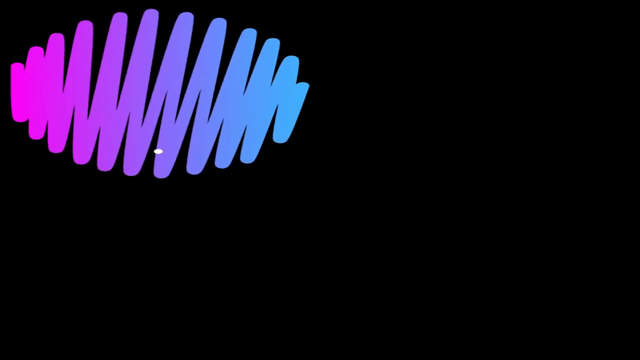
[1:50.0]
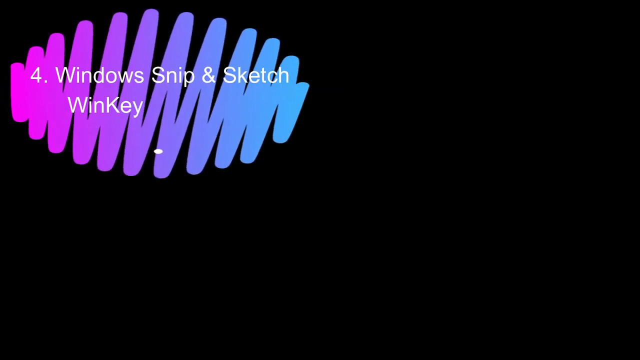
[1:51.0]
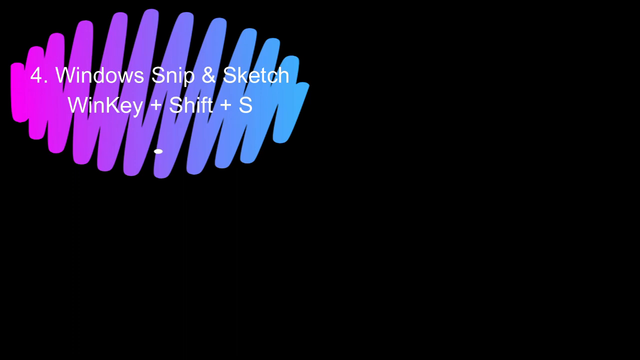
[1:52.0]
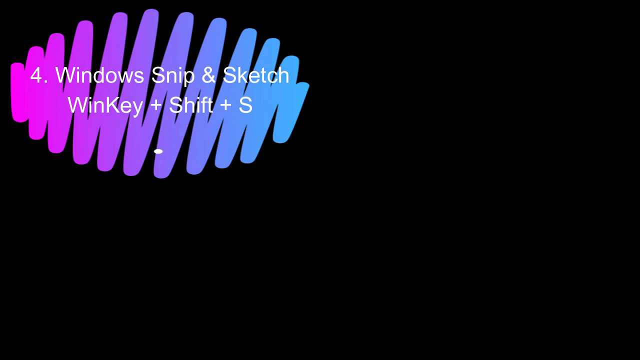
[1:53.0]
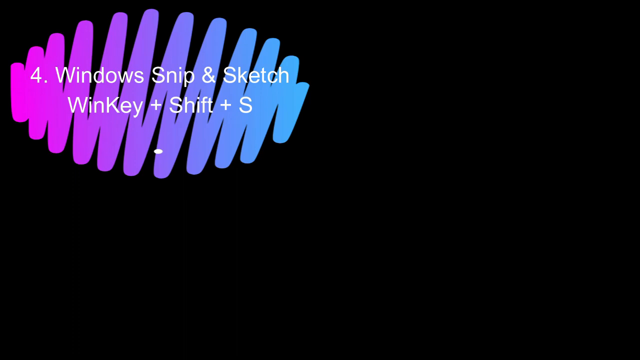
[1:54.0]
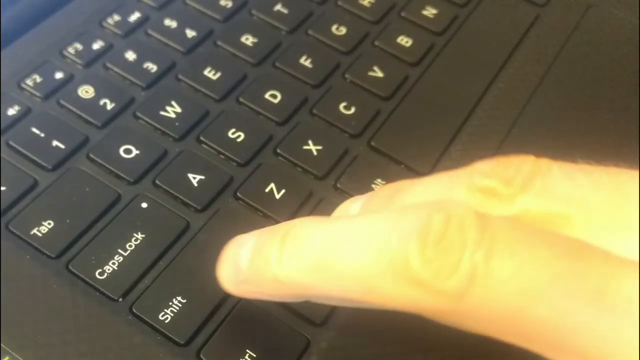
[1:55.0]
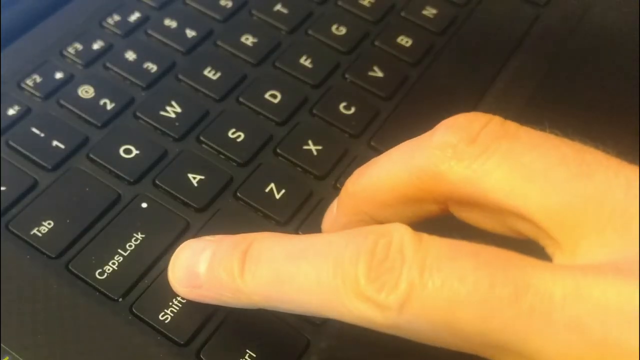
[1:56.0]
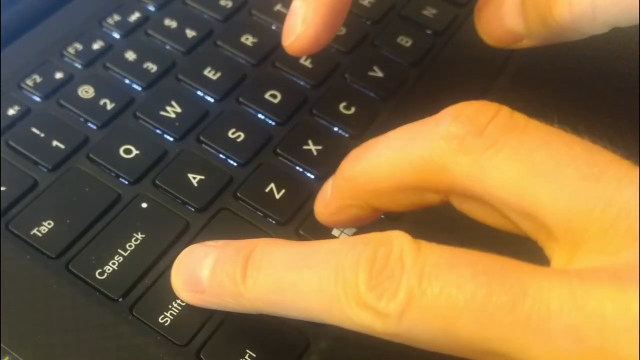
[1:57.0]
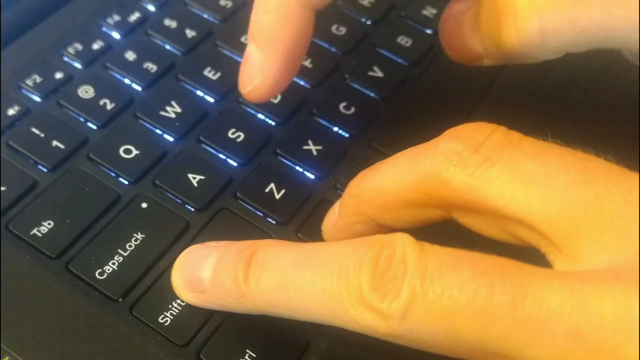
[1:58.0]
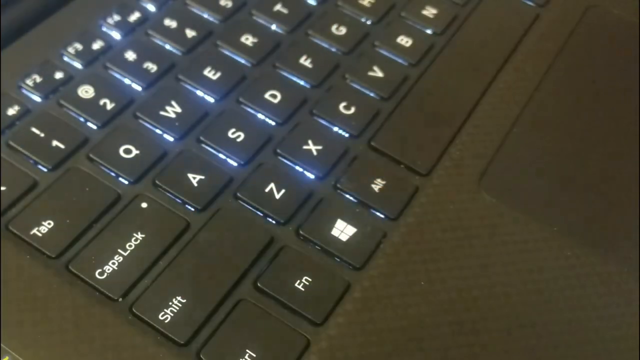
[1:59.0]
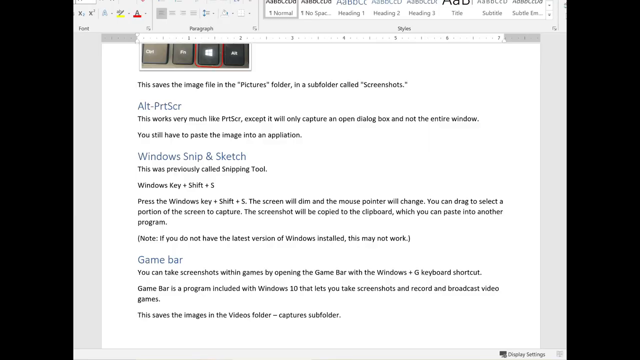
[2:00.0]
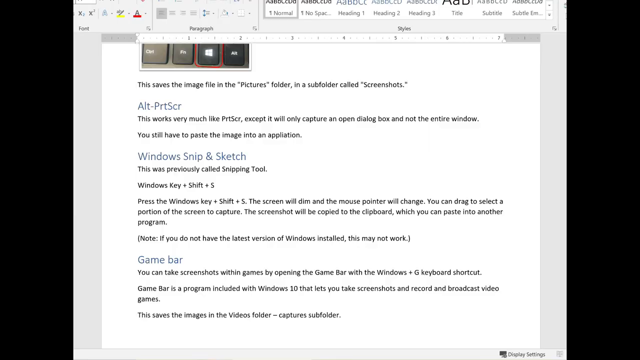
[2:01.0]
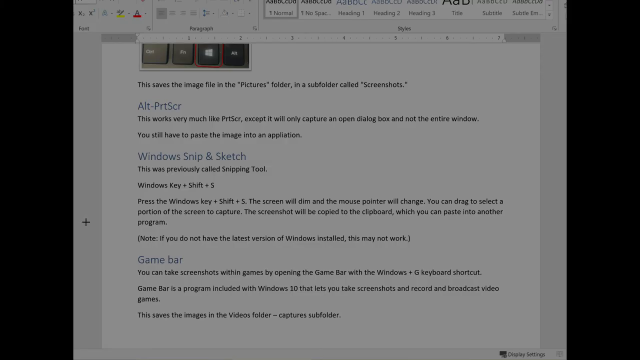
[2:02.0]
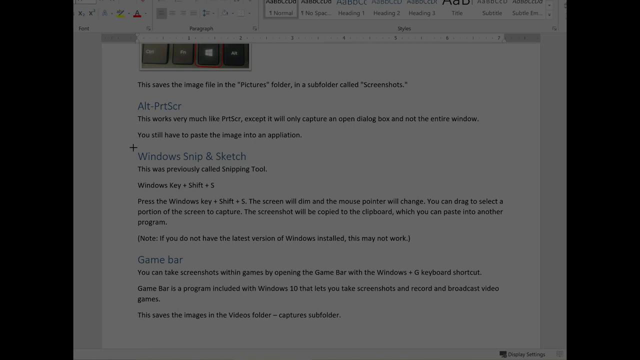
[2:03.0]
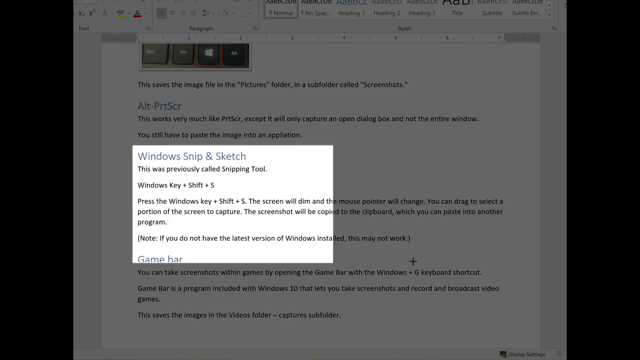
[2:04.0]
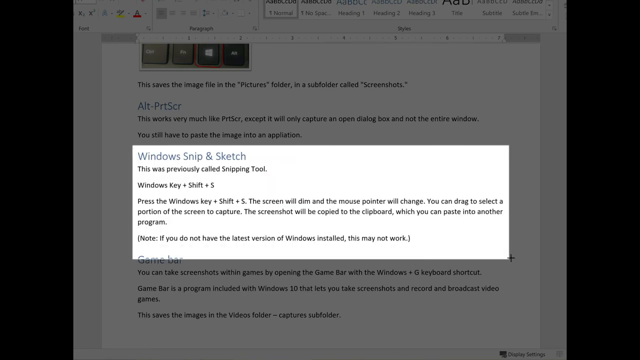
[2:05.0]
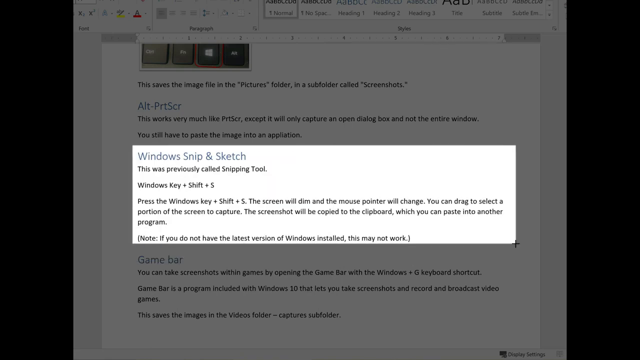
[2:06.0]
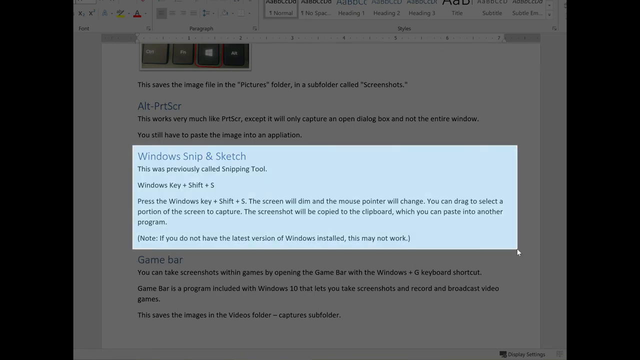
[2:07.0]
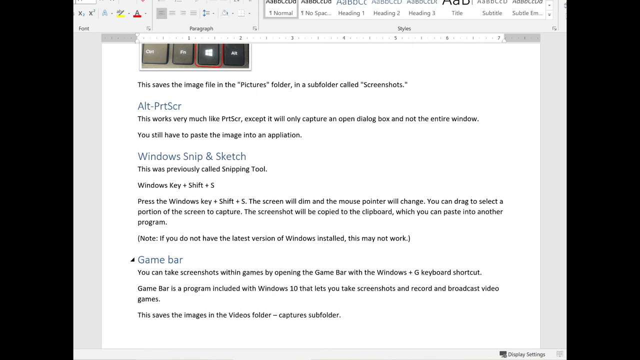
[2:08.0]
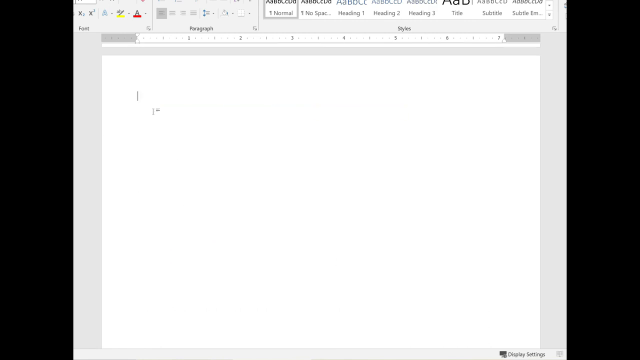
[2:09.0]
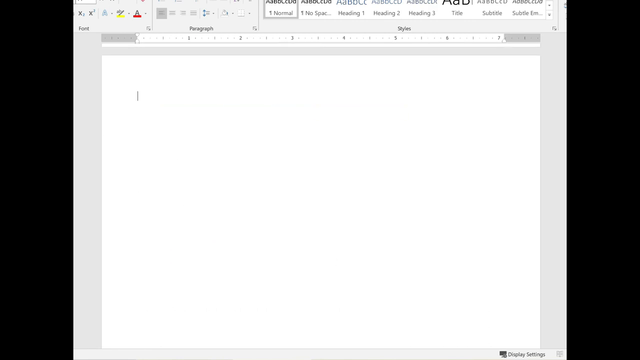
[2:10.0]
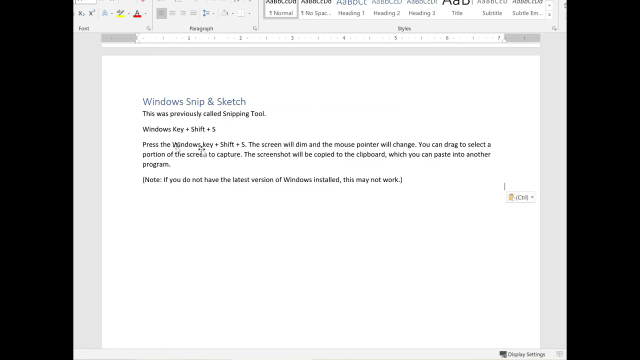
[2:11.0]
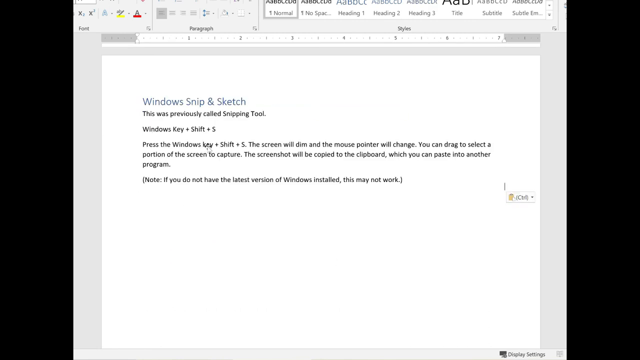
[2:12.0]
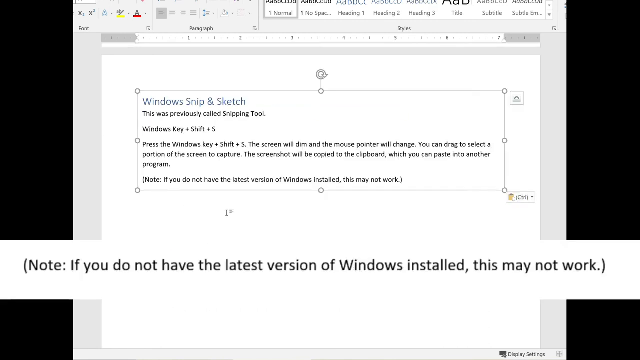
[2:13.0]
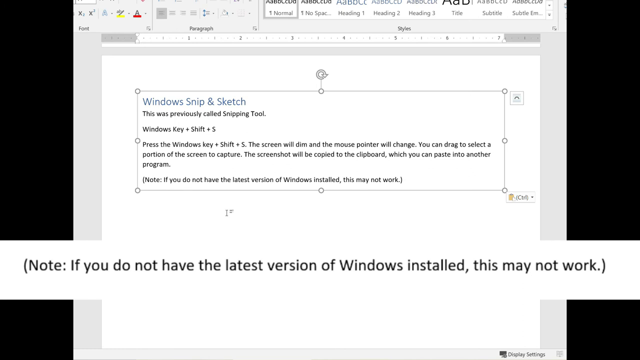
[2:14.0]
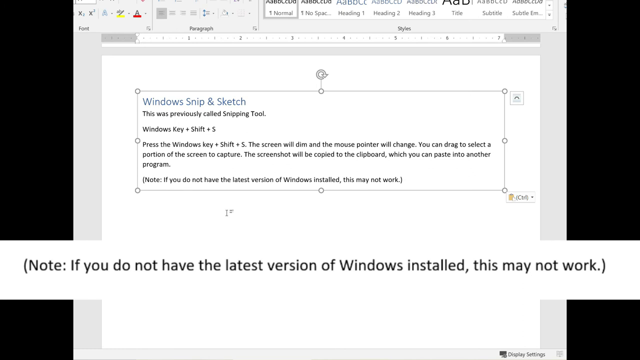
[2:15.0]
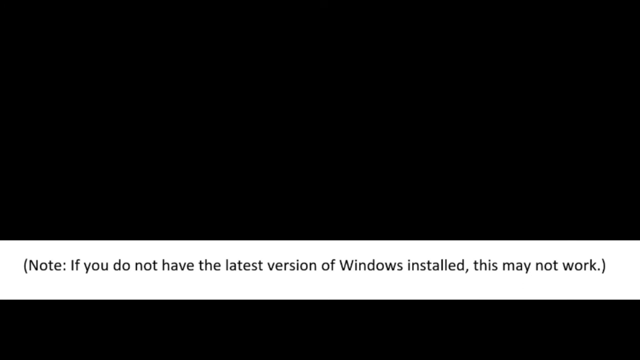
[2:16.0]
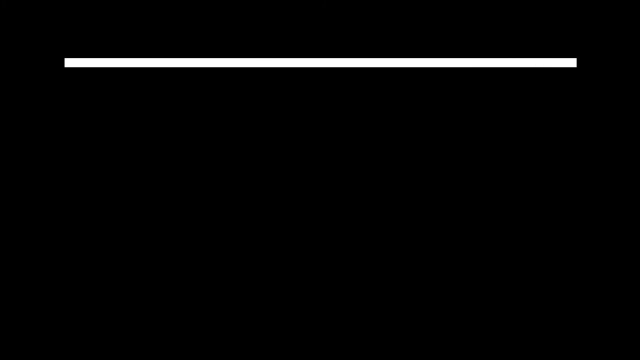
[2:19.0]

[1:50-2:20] The screen is all black with the squiggly-line circle, reading "4, Windows snip and sketch, WinKey + Shift + S." Another close-up of a keyboard shows someone's finger pressing a button two over from the space bar, then shift, then S. Back in a Word document, they highlight a part that says "Windows snip and sketch," go to a blank page in the document, and paste what they highlighted. A caption pops up reading "note, if you do not have the latest version of Windows installed, this may not work." The screen then goes black and reads "1. print screen, 2. print screen as an image, 3. alt-print screen, 4. Windows snip and sketch."